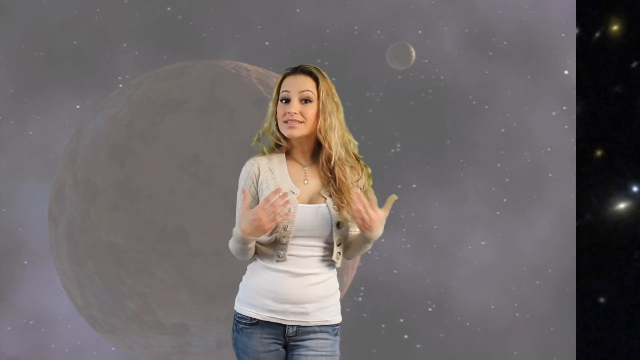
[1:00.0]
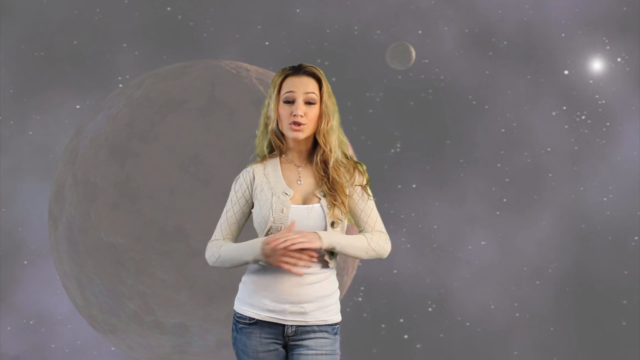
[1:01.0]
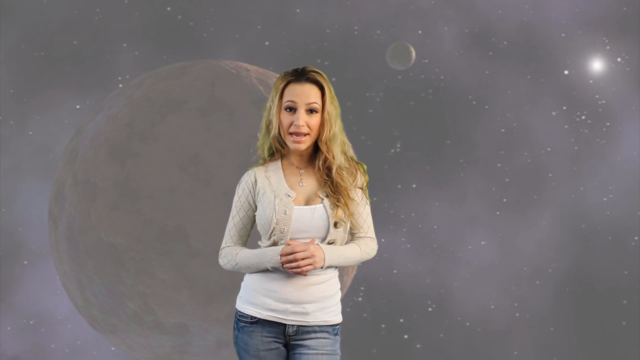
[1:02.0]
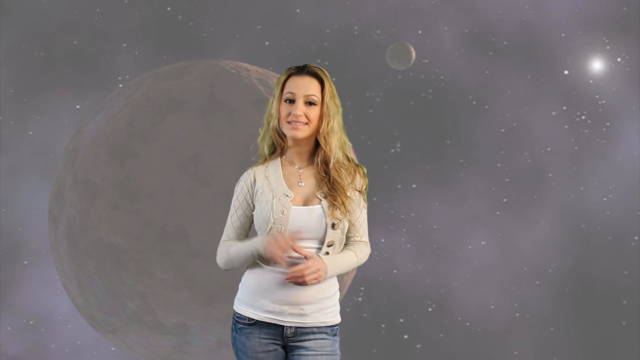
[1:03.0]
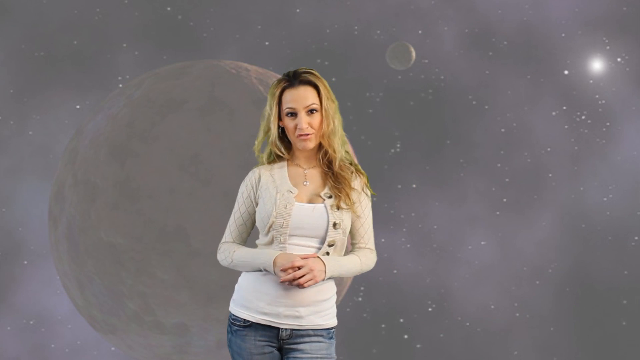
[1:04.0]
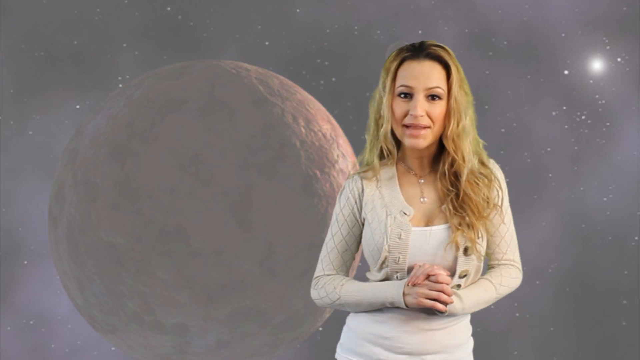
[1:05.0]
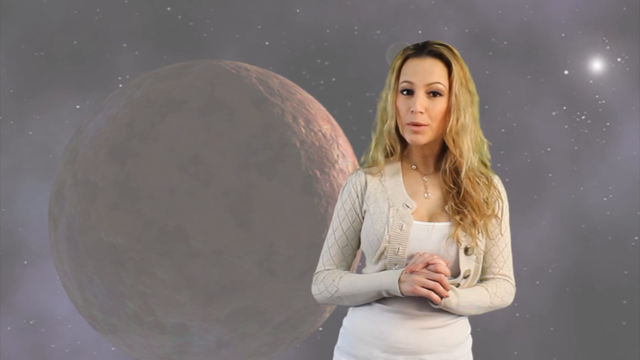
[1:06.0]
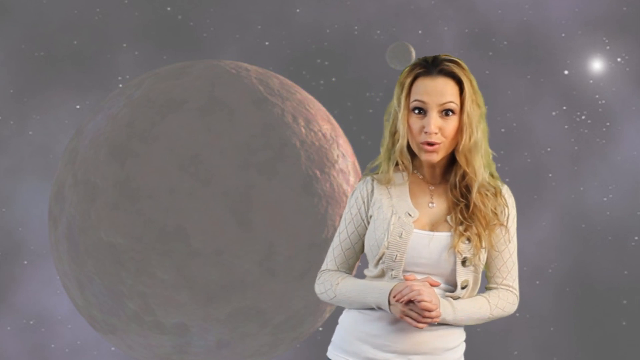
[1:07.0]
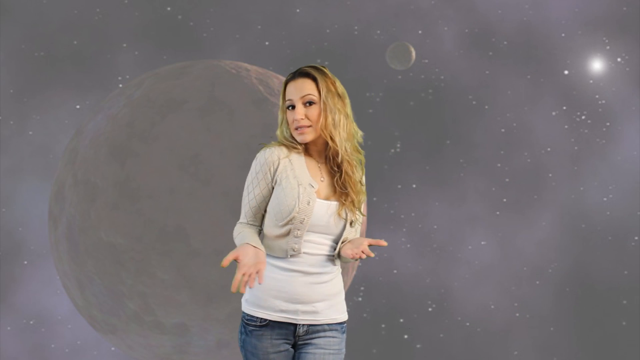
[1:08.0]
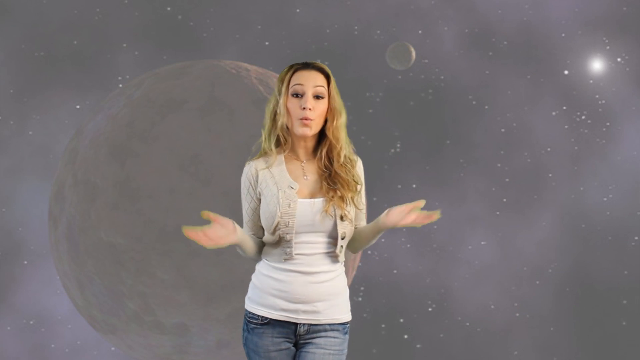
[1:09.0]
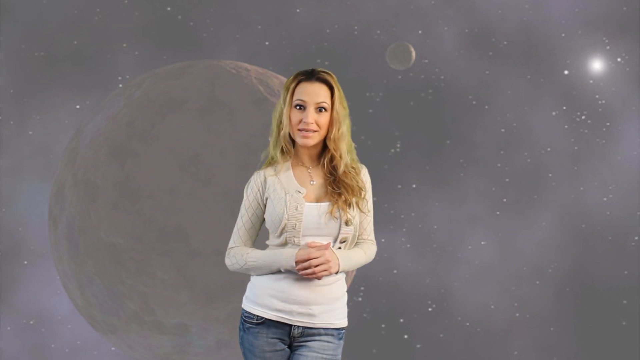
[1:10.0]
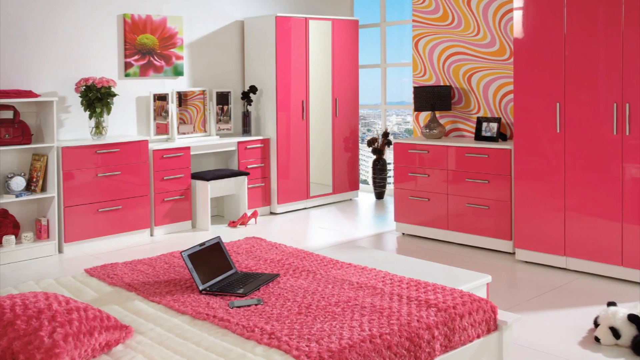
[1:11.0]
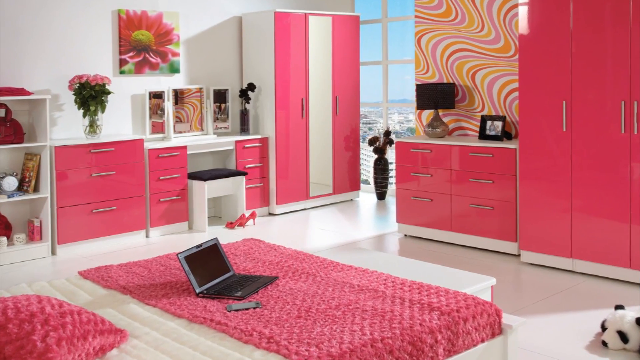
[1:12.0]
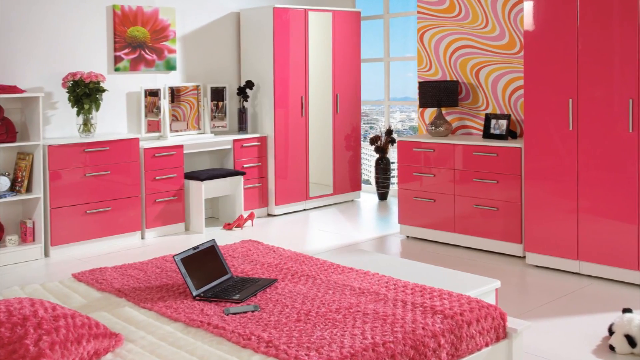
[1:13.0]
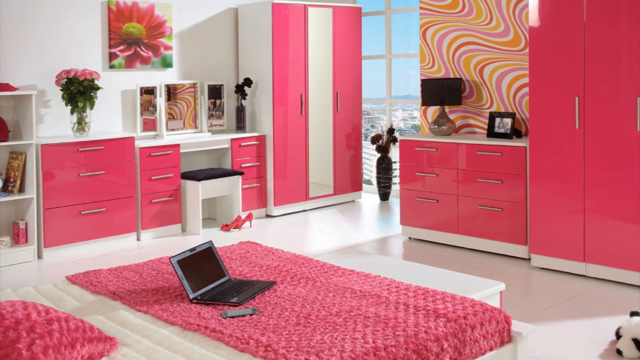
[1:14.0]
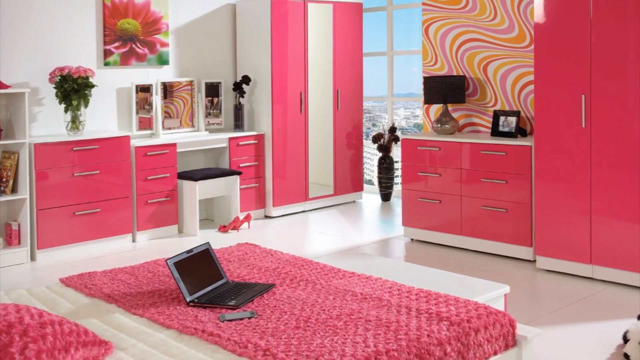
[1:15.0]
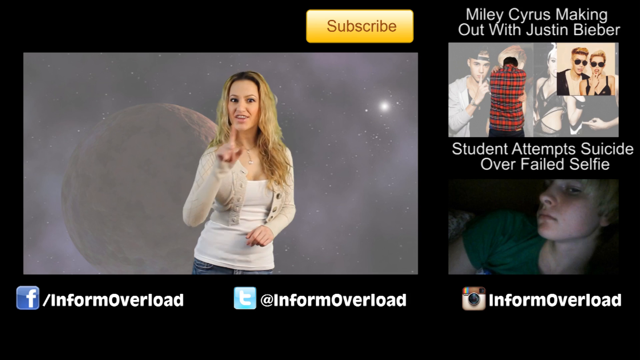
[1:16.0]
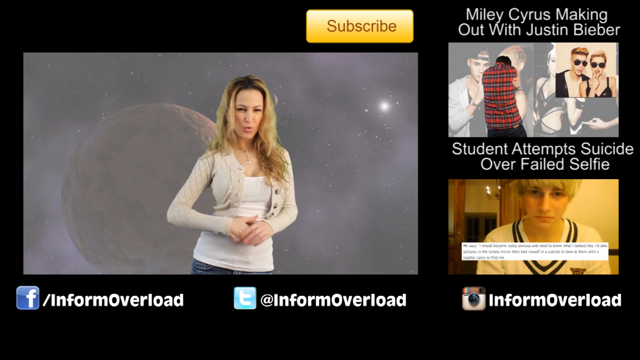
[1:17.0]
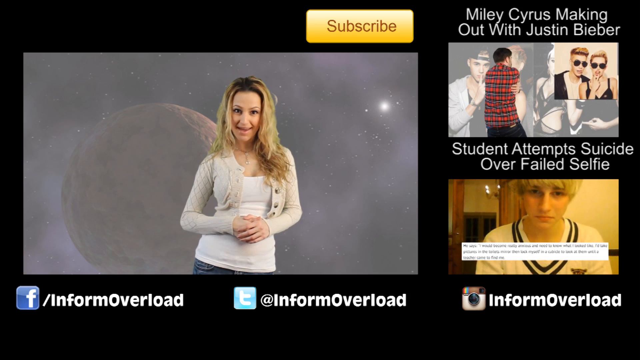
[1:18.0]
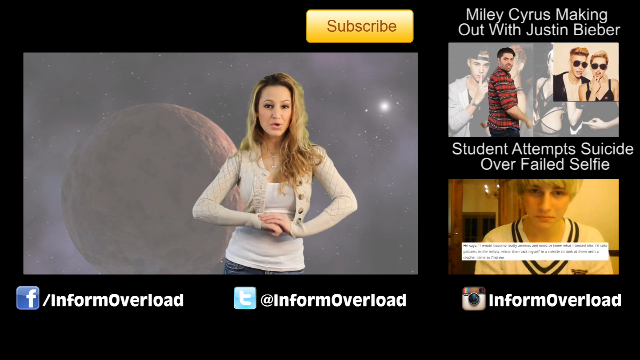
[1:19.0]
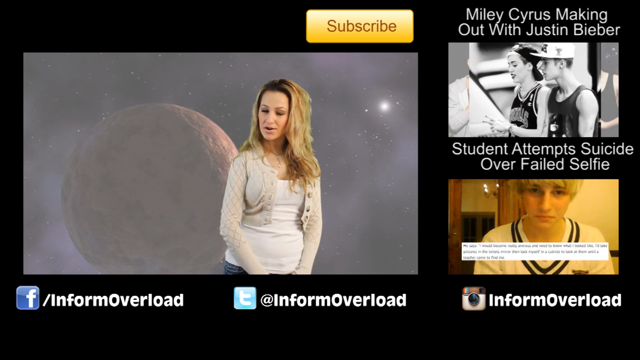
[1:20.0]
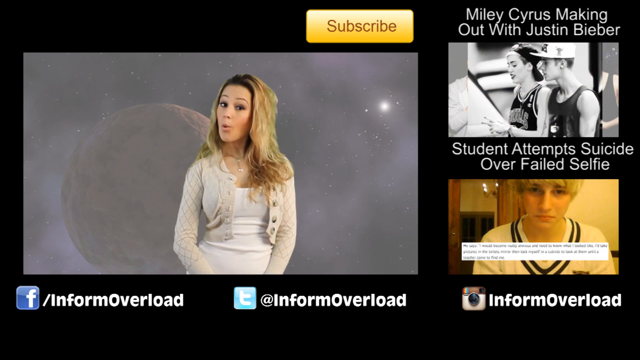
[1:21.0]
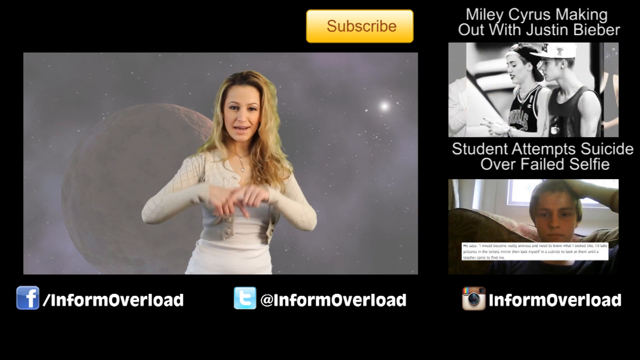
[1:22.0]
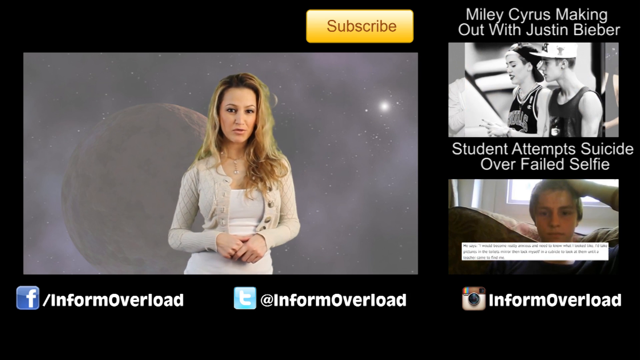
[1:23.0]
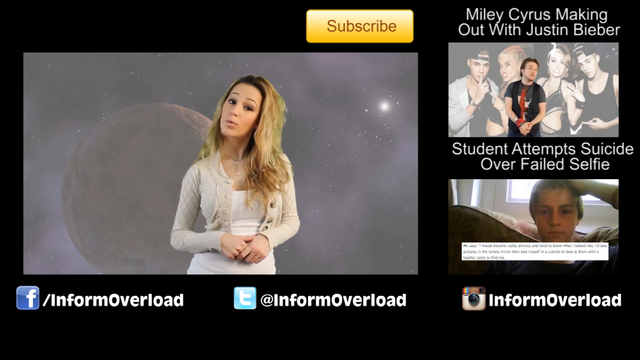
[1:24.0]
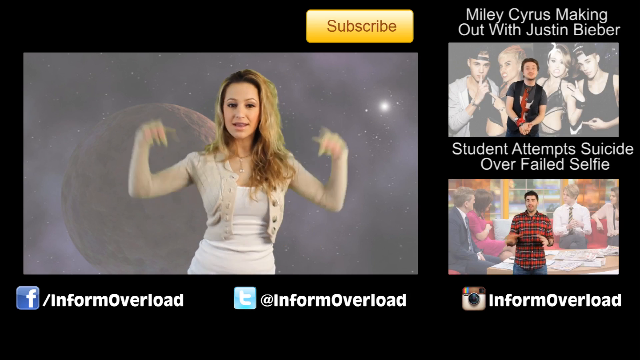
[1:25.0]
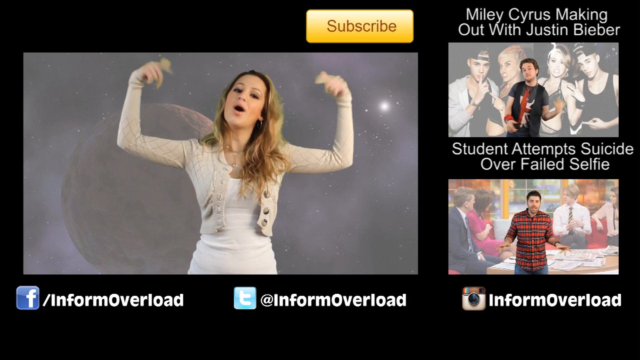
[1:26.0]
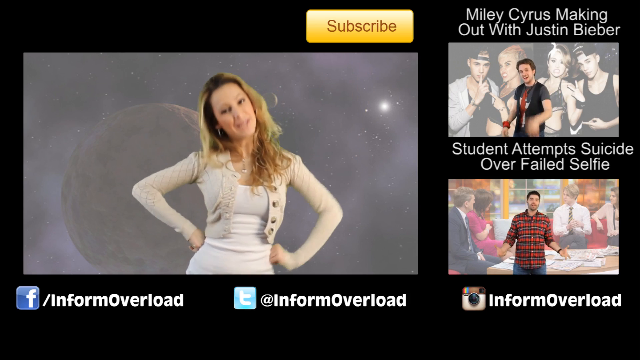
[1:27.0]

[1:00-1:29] A blonde woman with long, wavy hair reaching past her shoulders wears a cropped cream-colored sweater over a cream camisole. As she speaks, she holds both hands clasped in front of her with elbows bent, nods her head, and gestures with her hand, pointing. The view then shows the background behind her: a planetary body on a blurry-looking background. She continues speaking, gesturing with her hands and shrugging her shoulder in an animated manner. The image behind her also shows a small planetary body toward the upper part, and to the upper right a shining body like a big, shiny star. The woman keeps speaking, gesturing with both hands. Then the video transitions to a room decorated in pink and white. A laptop computer is on the pink throw on top of the white bed, and the view outside can be seen through the window. On the wall to the left, above the pink dresser, is wall art of a large pink flower.